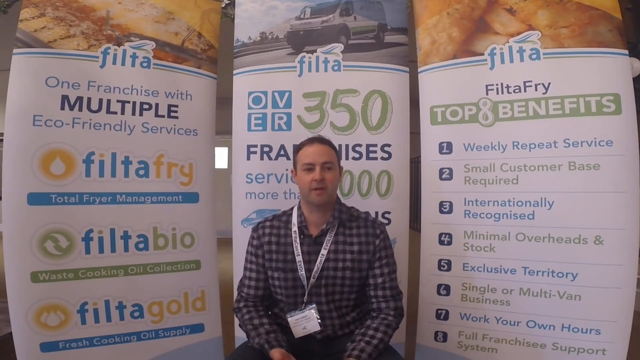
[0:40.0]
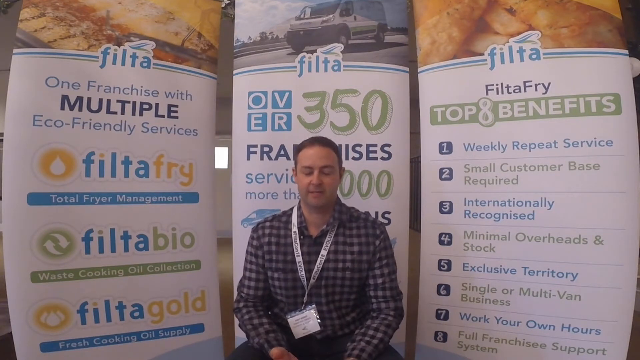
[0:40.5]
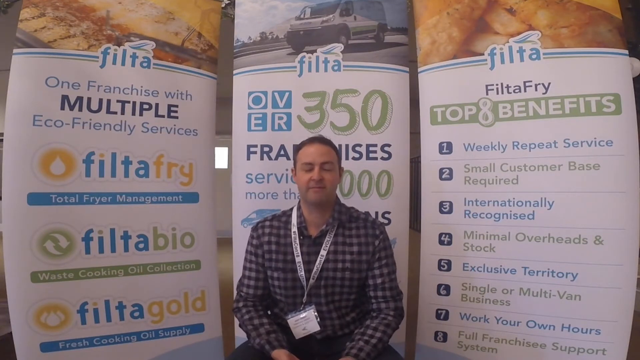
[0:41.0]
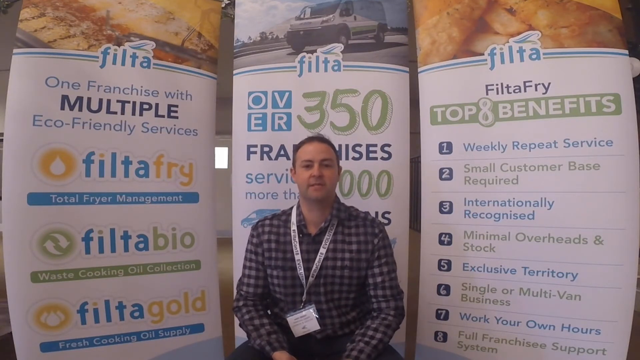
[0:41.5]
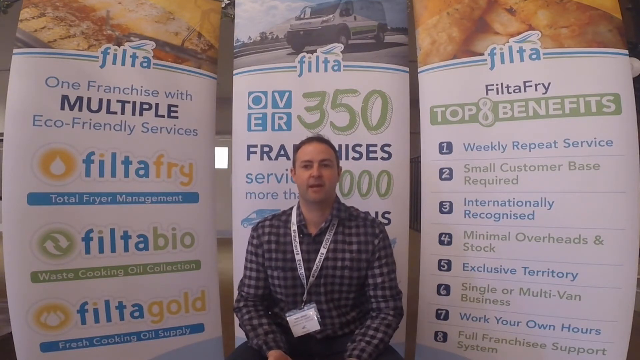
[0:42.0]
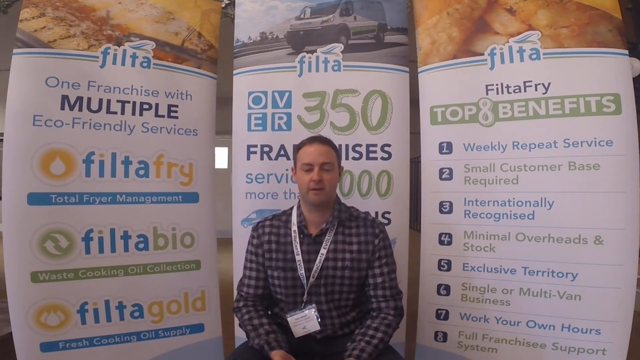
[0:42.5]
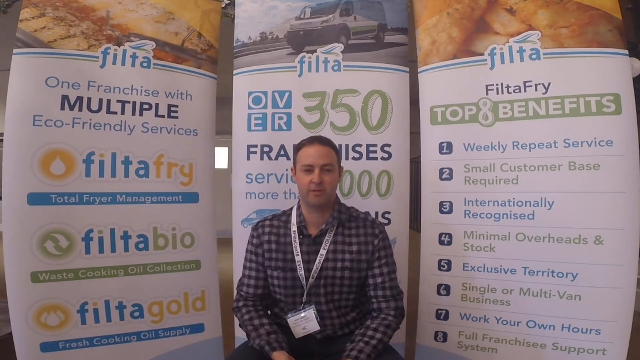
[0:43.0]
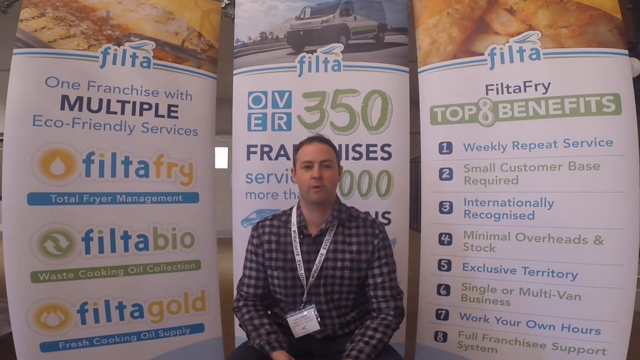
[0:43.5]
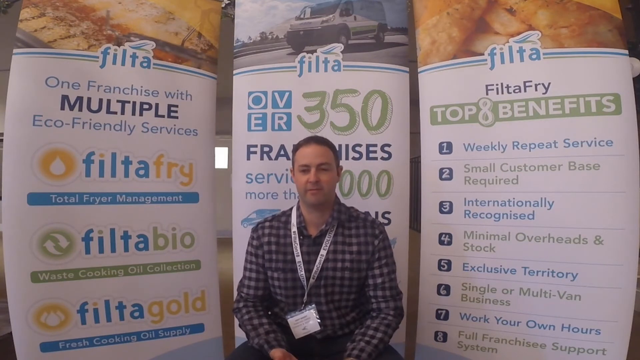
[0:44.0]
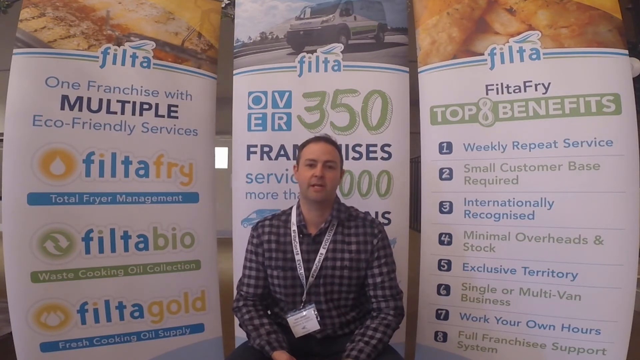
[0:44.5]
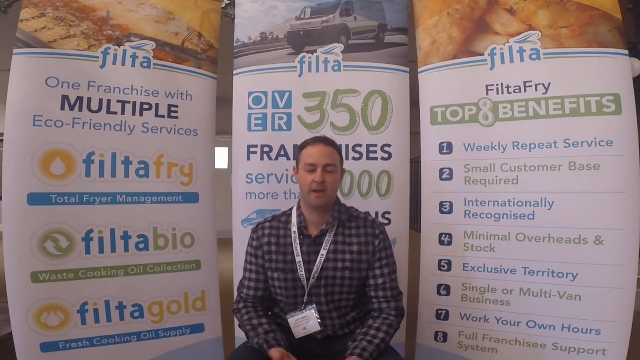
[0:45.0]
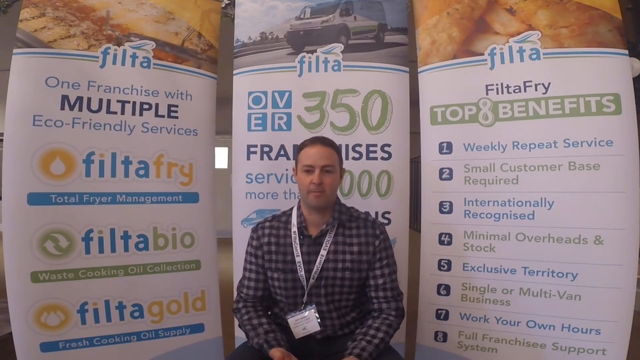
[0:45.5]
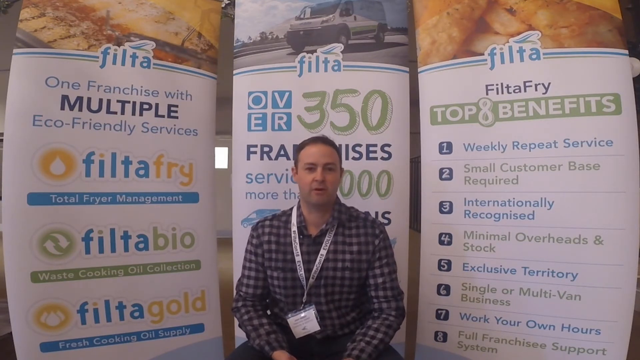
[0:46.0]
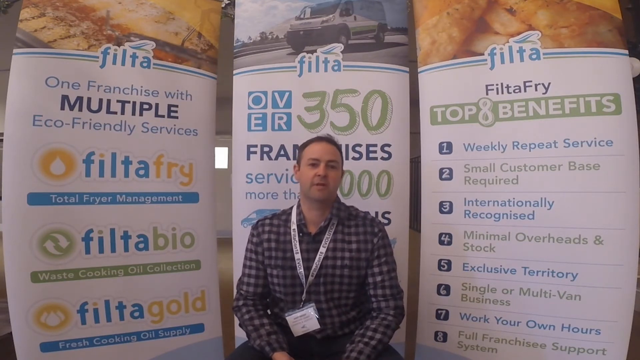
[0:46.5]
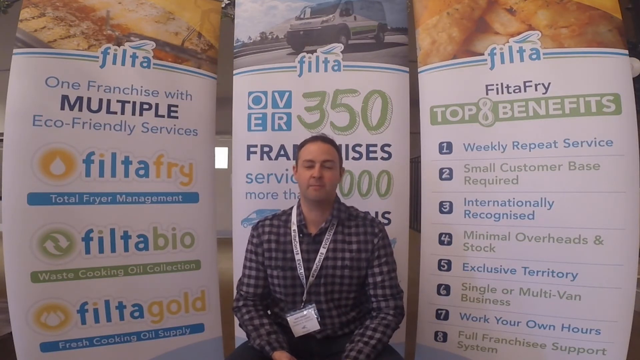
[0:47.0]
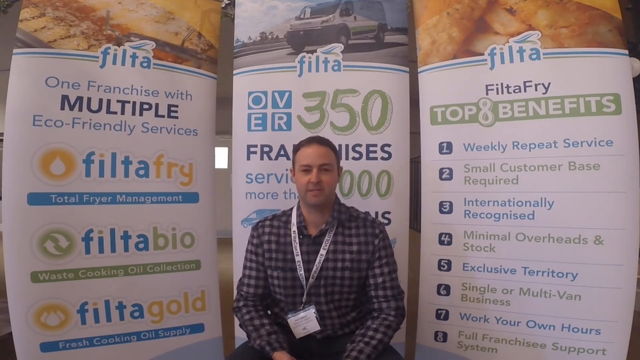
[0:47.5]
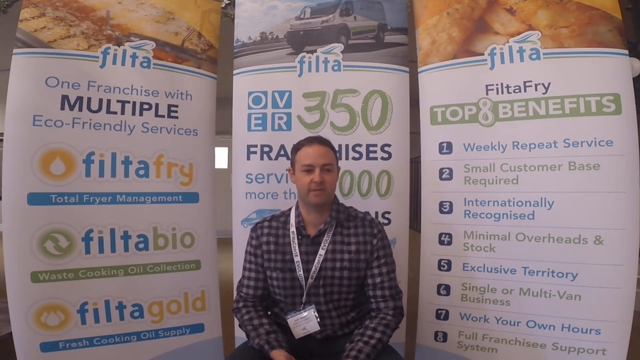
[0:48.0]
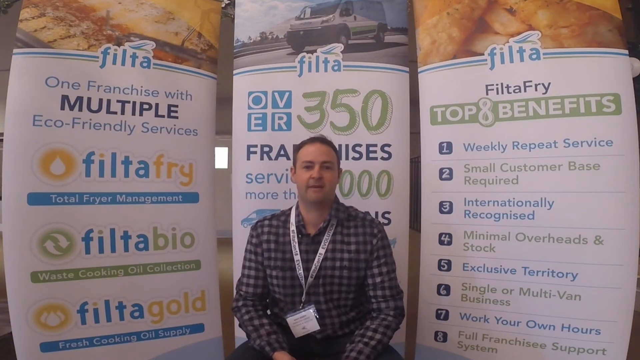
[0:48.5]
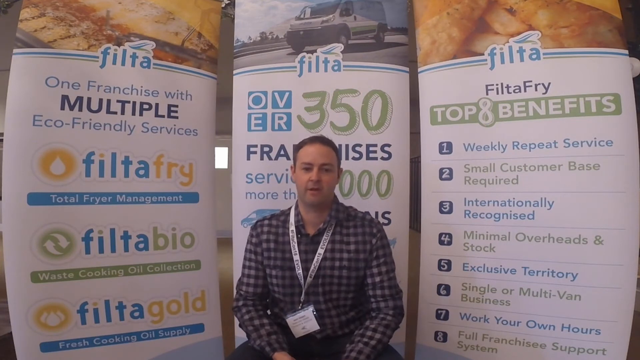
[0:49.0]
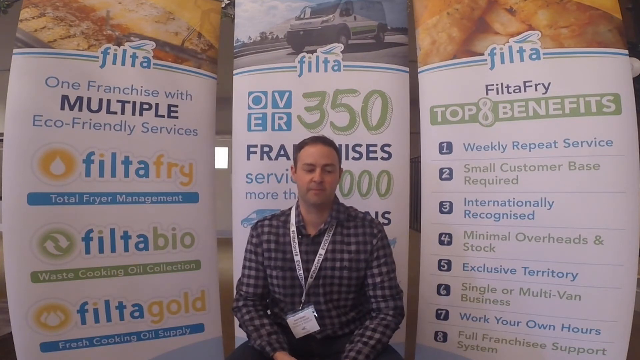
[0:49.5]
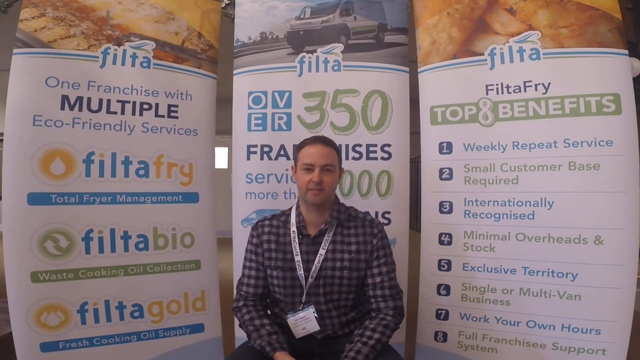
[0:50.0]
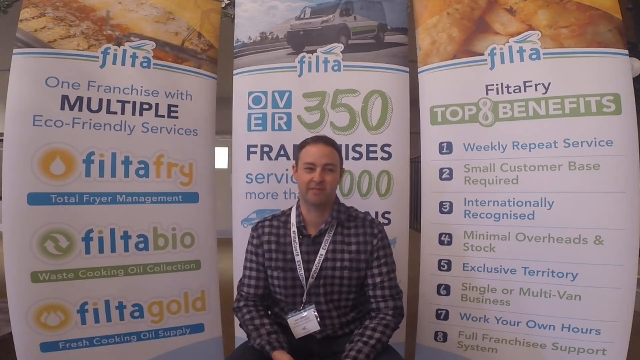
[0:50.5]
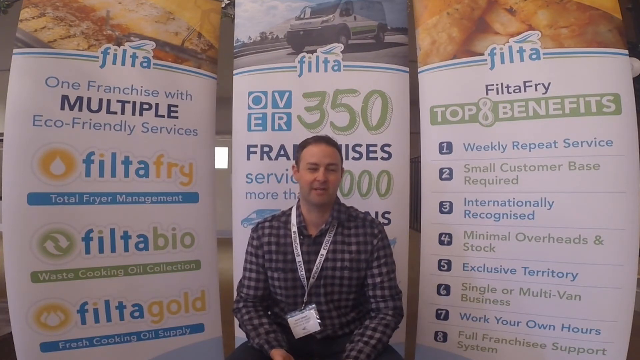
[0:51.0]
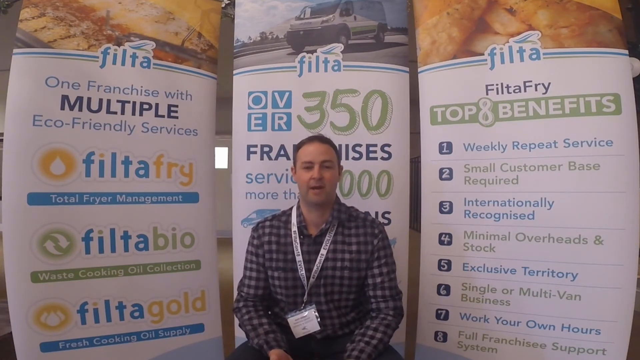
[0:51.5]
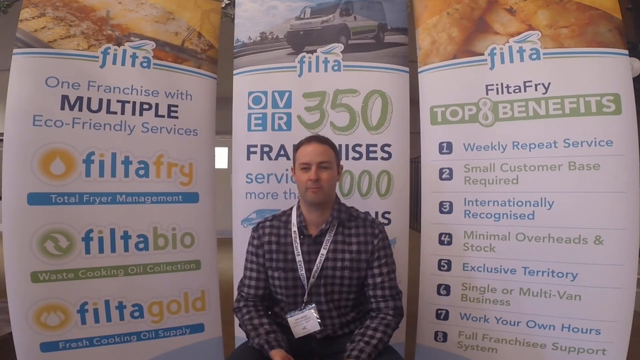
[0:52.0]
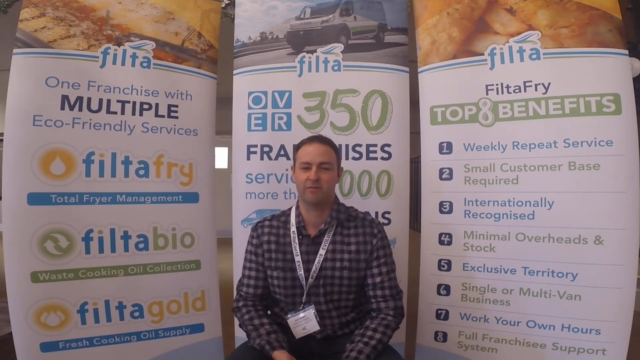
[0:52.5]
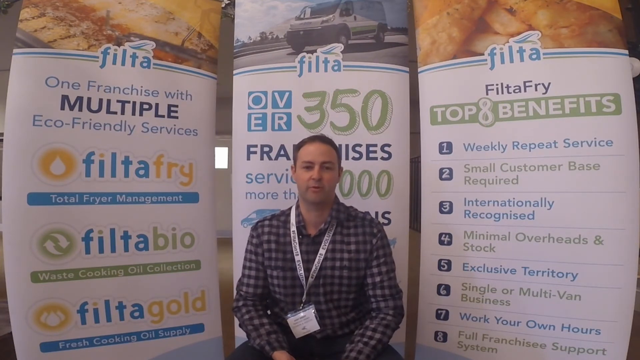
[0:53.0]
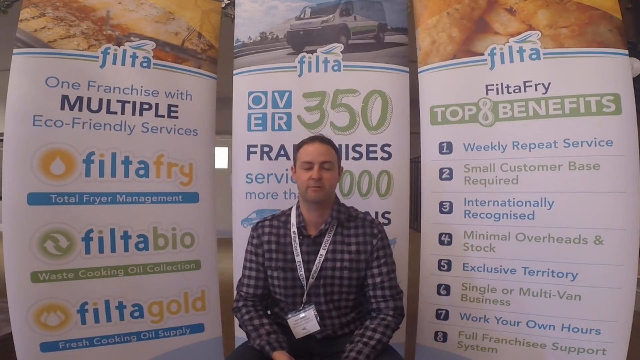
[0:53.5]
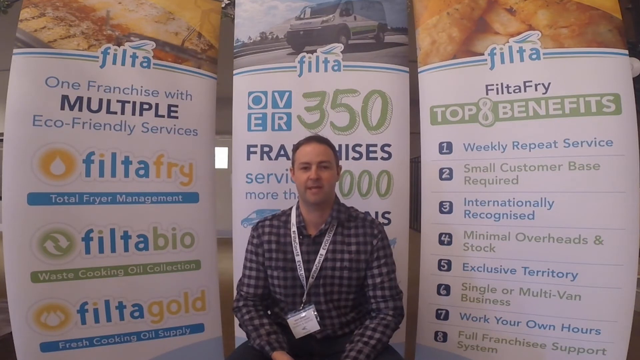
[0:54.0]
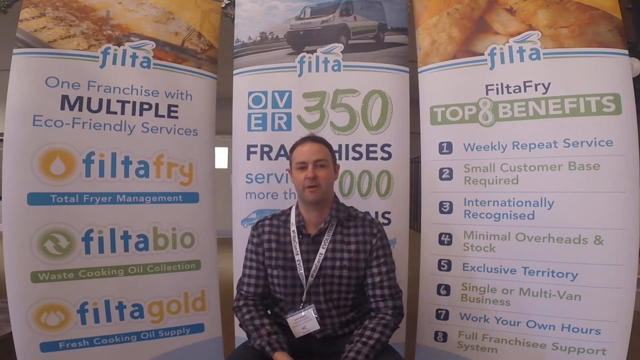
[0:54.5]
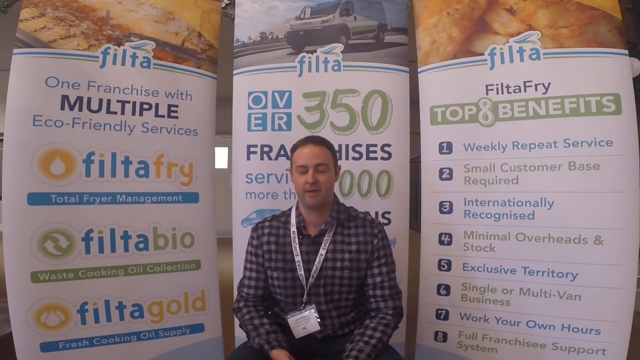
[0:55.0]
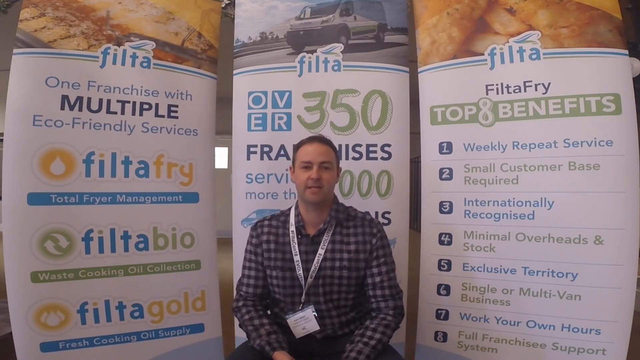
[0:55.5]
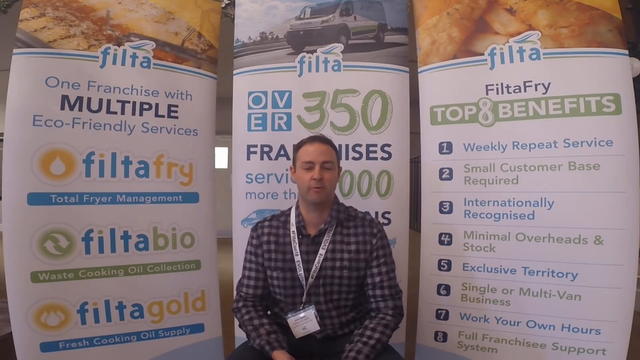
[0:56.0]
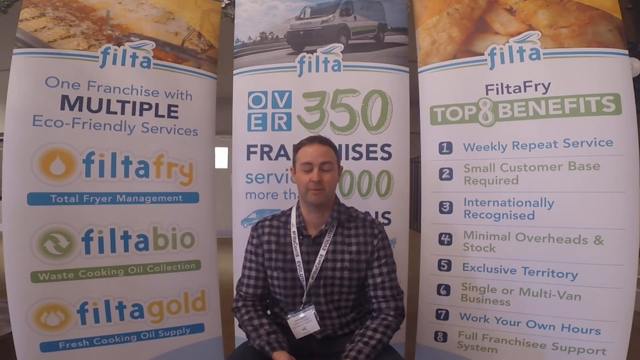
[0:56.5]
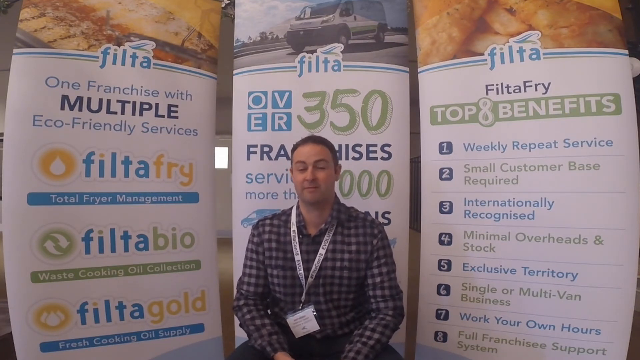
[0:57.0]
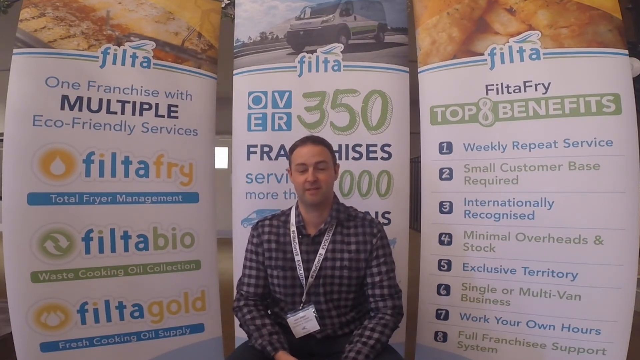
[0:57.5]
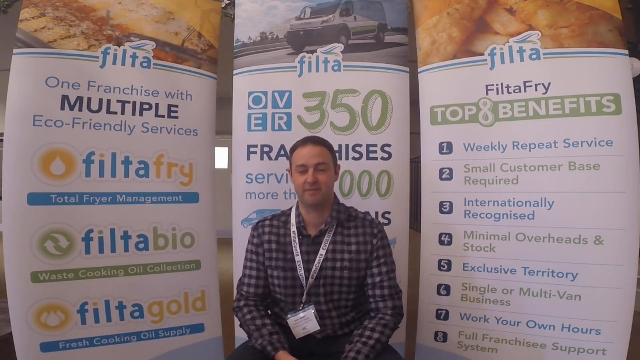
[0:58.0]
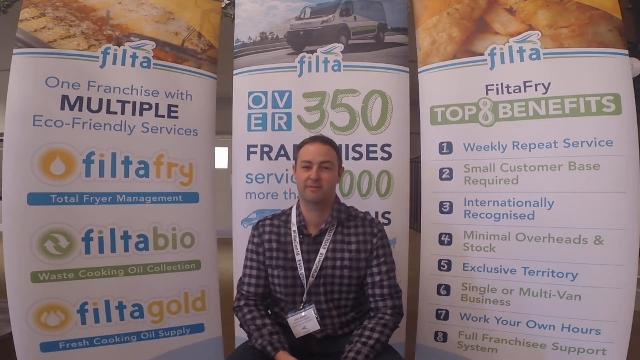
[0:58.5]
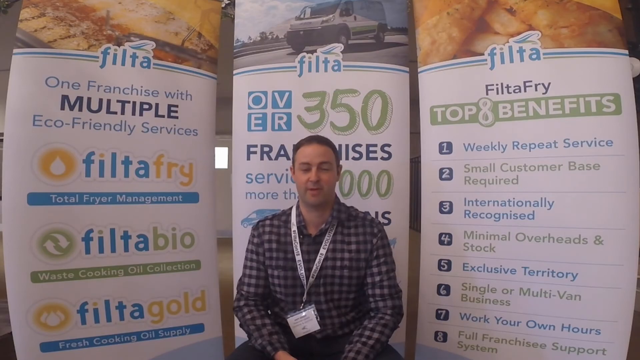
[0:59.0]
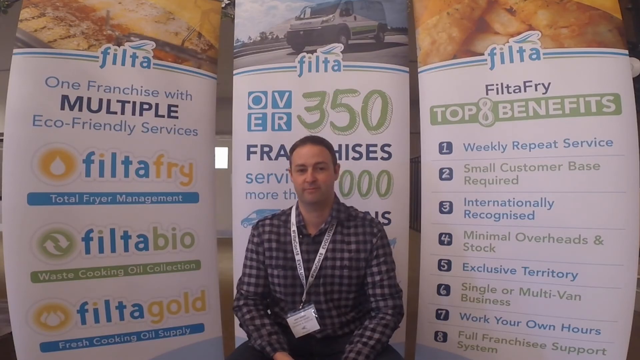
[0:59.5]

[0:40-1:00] Andy Knight, Coventry and Lancaster Filtafry franchise owner, continues to sit and talk while the background remains the same. No different text is shown beyond the three banner-style background stands presenting Filtafry. He wears a checkered shirt and a name tag that hangs around his neck like a necklace.